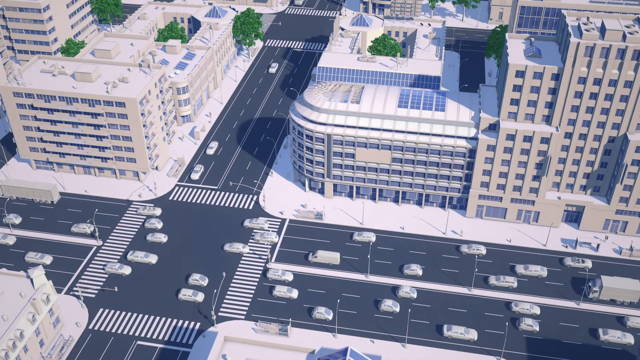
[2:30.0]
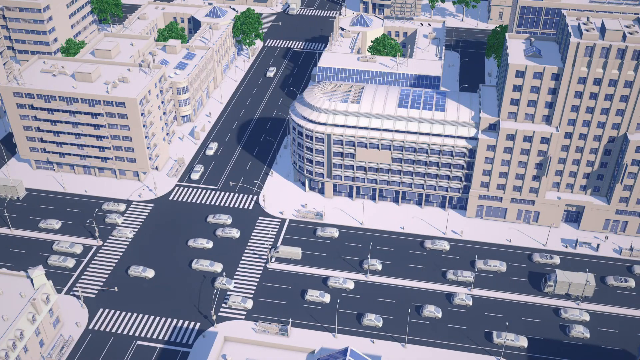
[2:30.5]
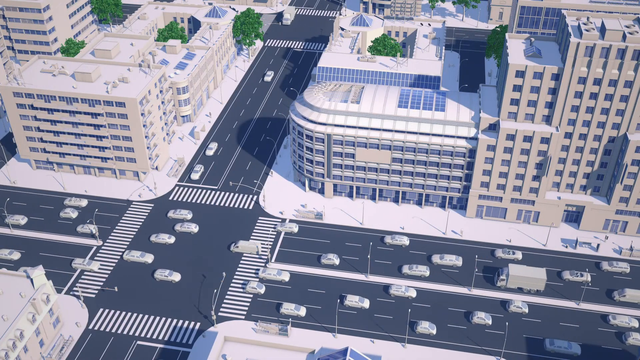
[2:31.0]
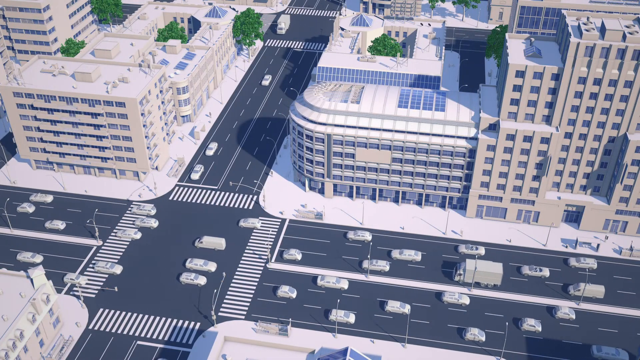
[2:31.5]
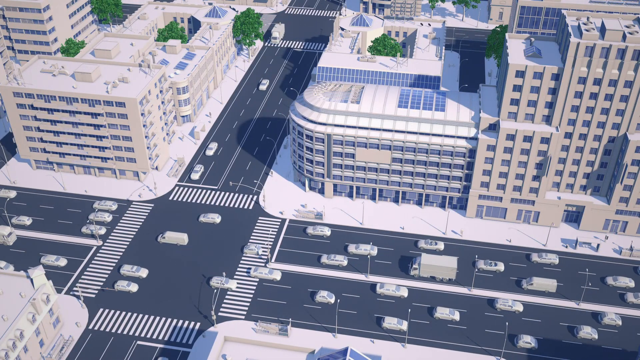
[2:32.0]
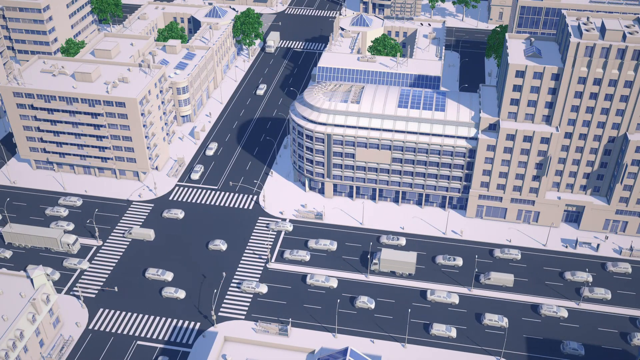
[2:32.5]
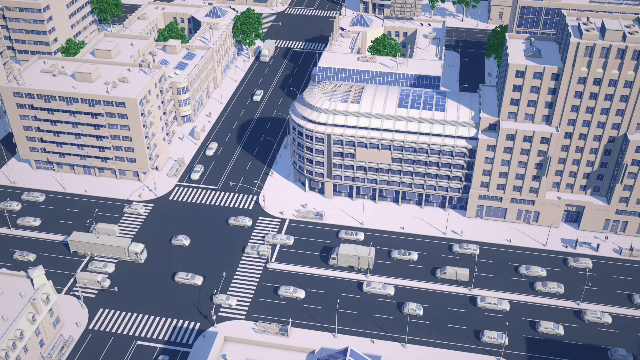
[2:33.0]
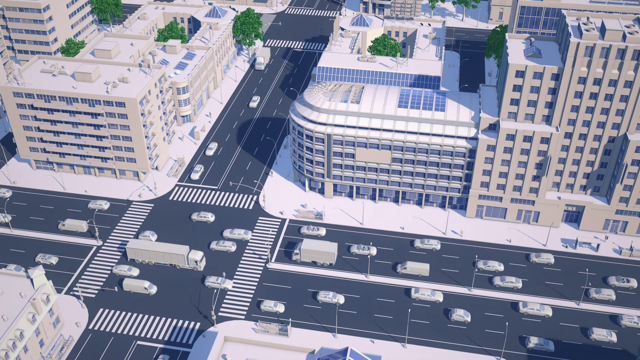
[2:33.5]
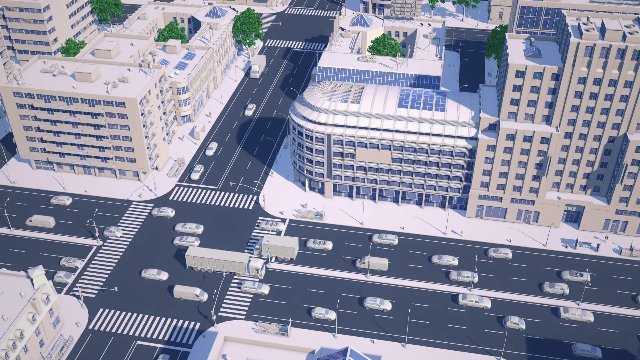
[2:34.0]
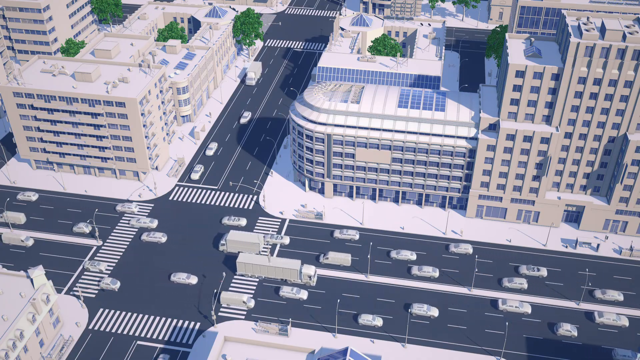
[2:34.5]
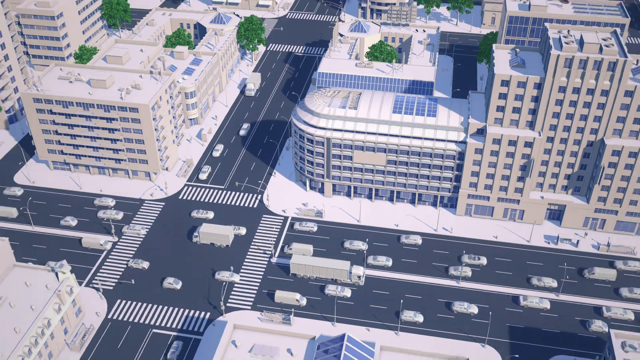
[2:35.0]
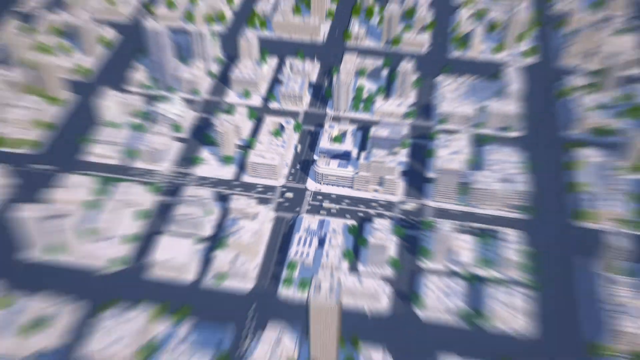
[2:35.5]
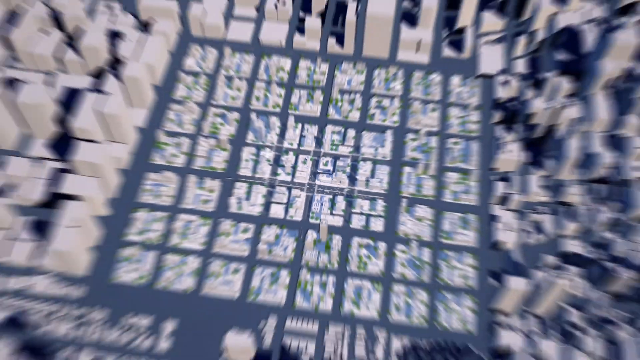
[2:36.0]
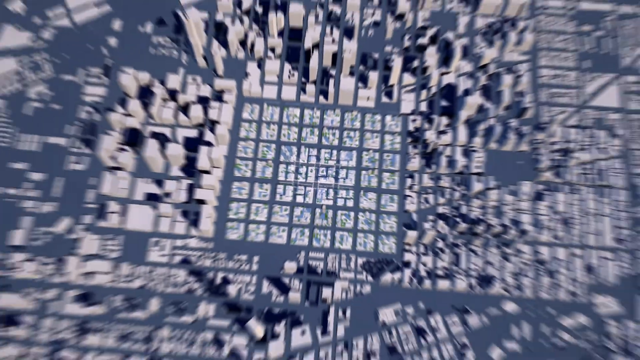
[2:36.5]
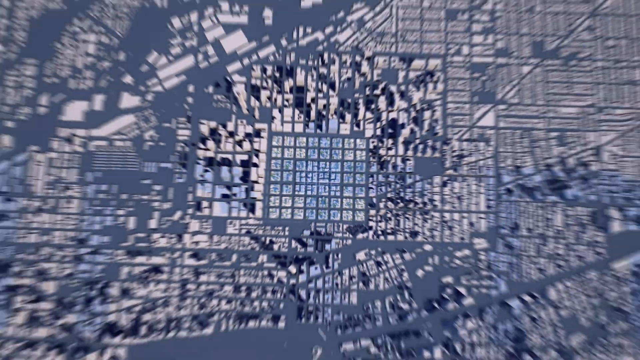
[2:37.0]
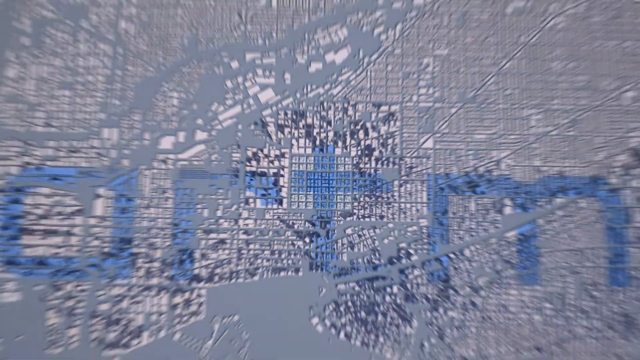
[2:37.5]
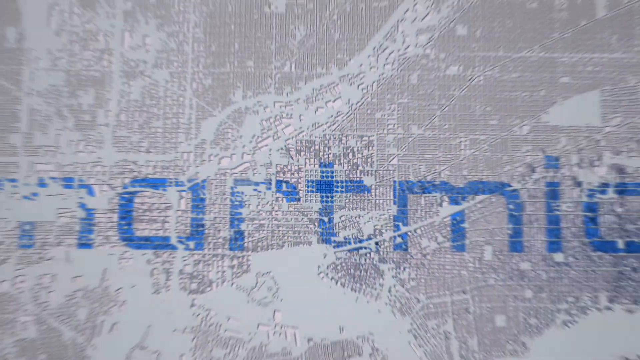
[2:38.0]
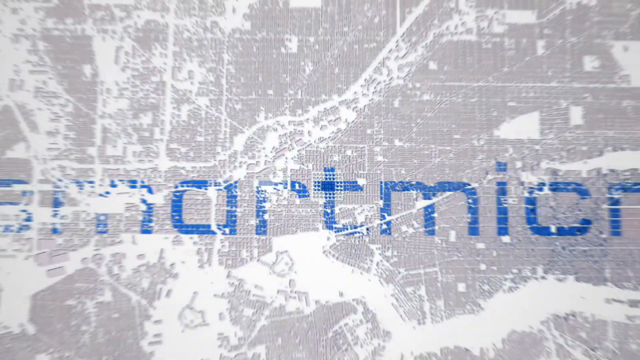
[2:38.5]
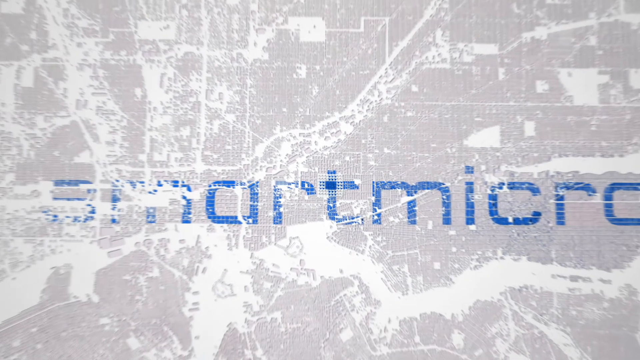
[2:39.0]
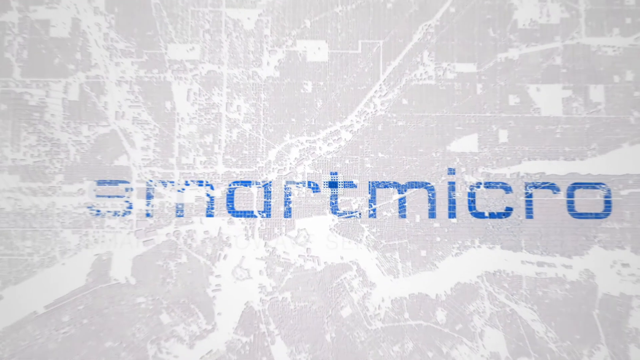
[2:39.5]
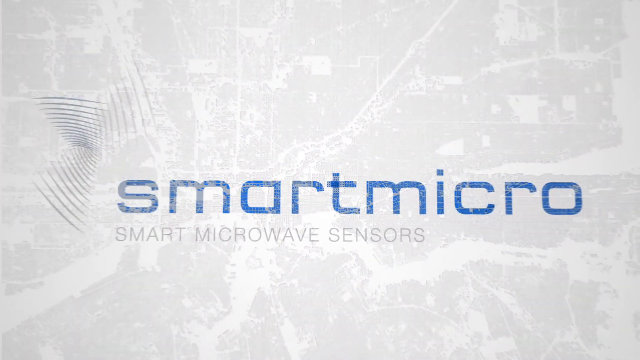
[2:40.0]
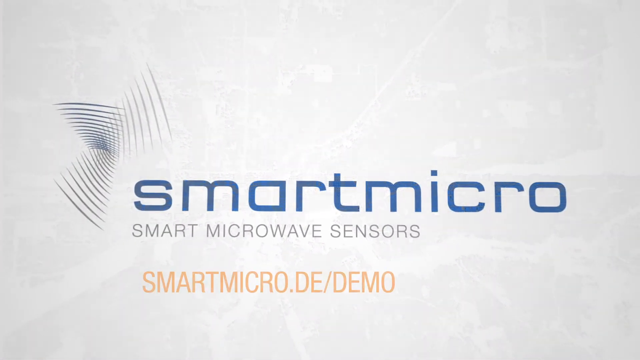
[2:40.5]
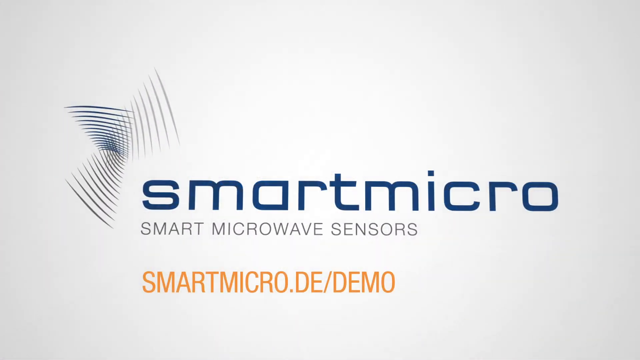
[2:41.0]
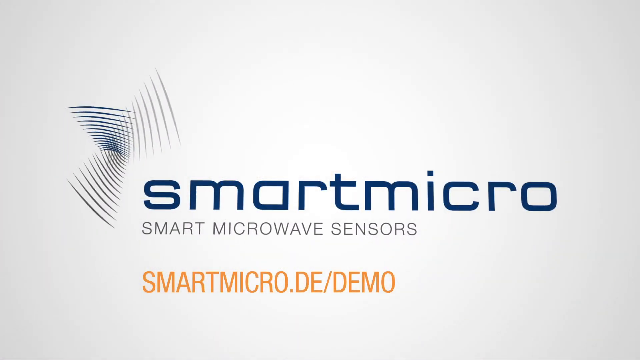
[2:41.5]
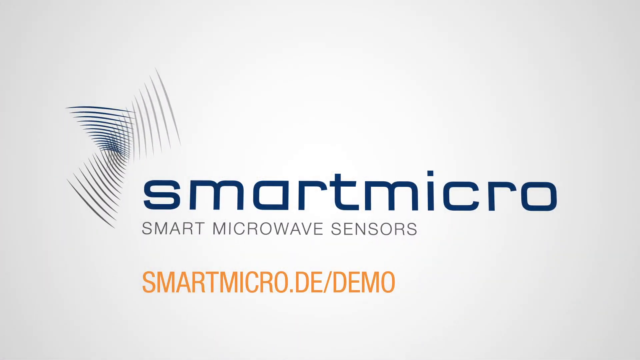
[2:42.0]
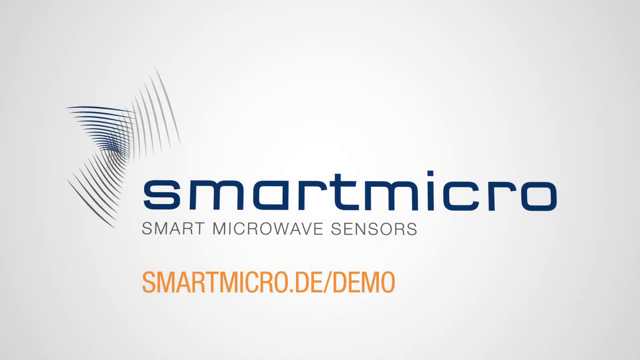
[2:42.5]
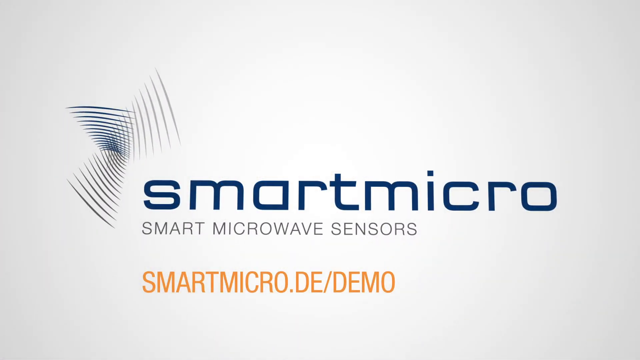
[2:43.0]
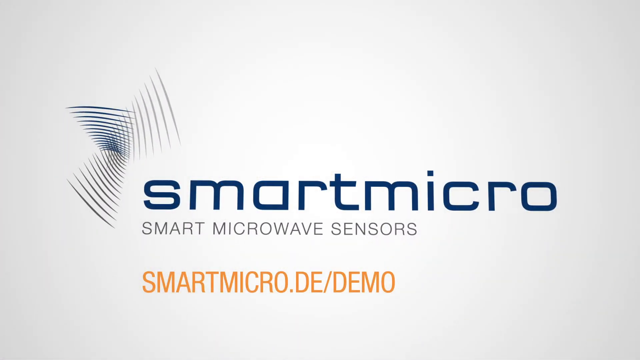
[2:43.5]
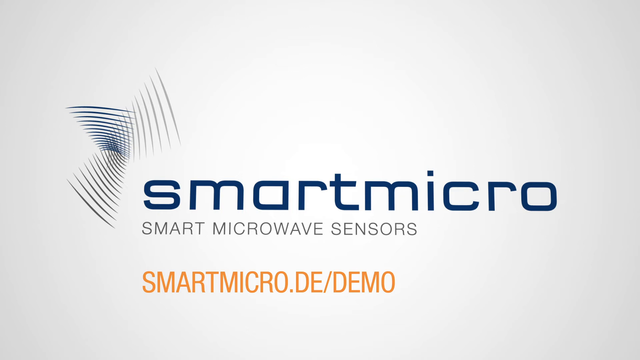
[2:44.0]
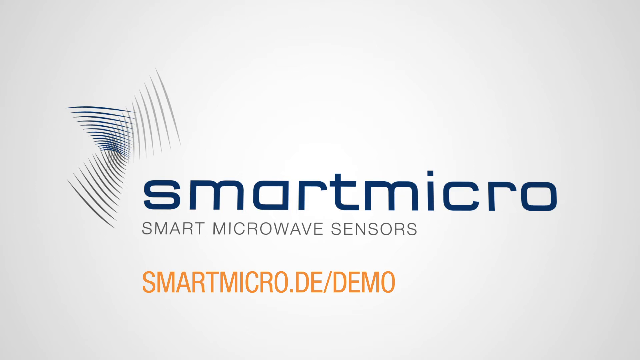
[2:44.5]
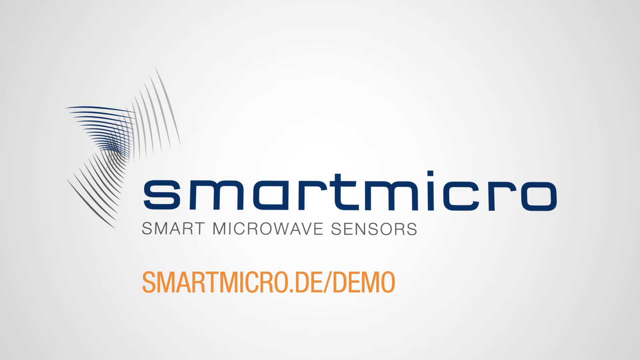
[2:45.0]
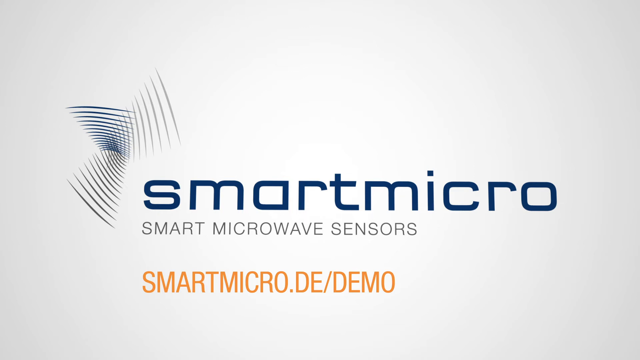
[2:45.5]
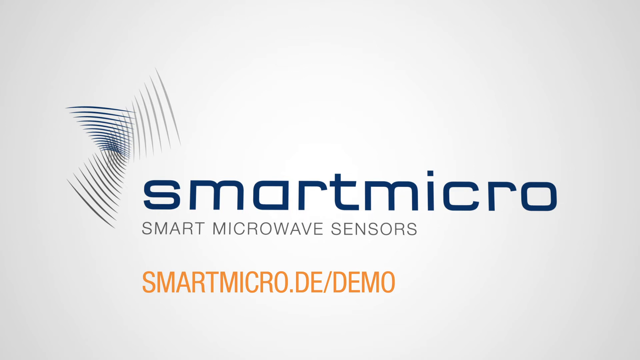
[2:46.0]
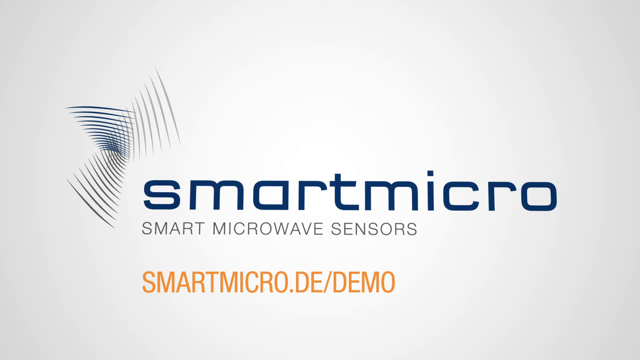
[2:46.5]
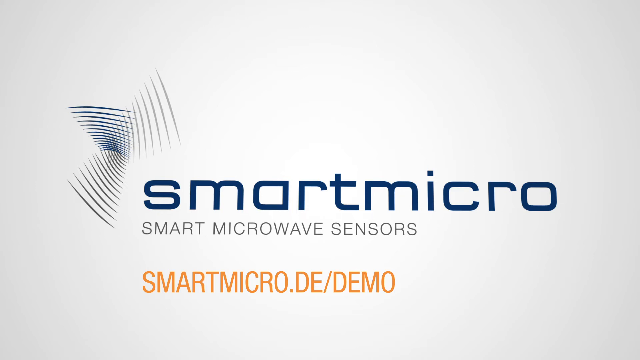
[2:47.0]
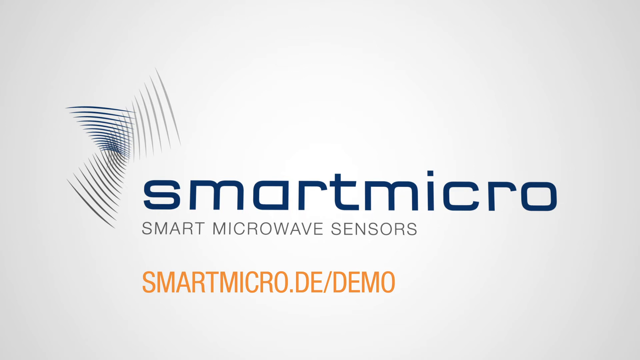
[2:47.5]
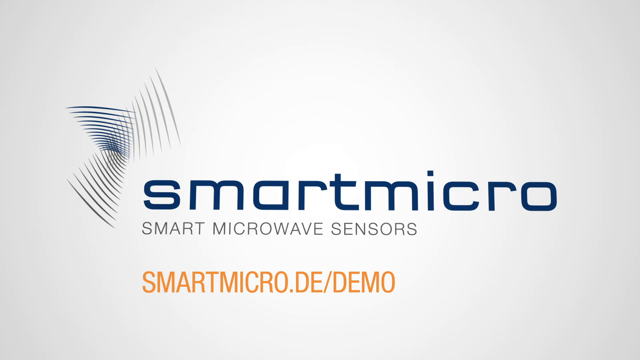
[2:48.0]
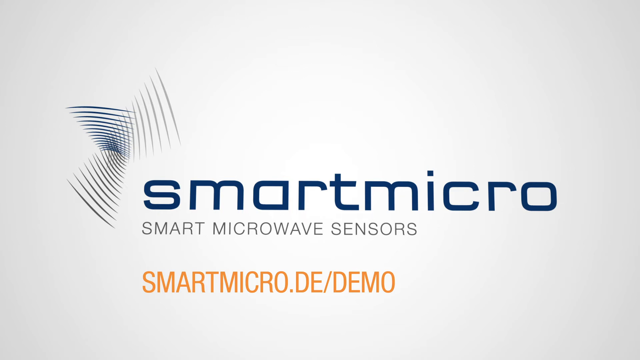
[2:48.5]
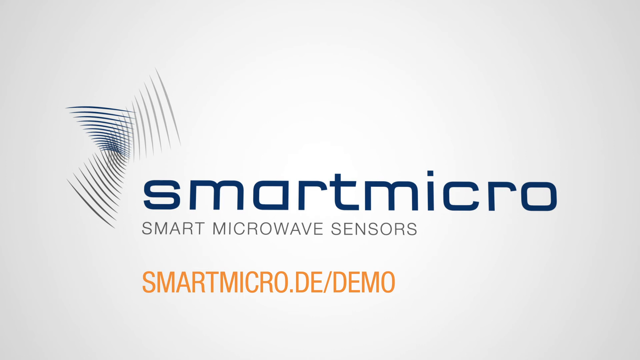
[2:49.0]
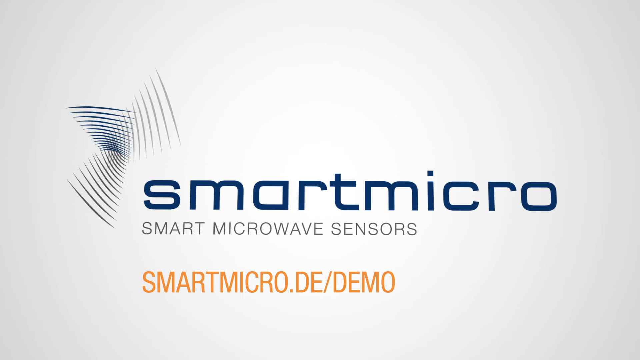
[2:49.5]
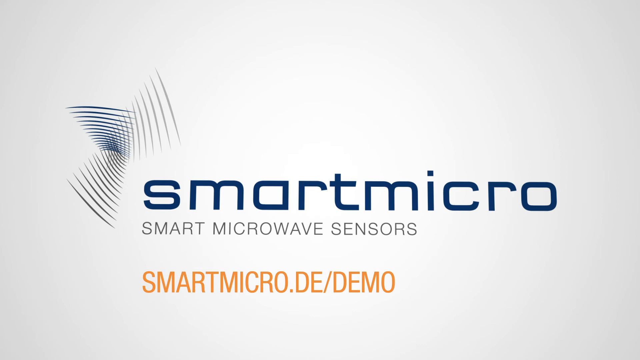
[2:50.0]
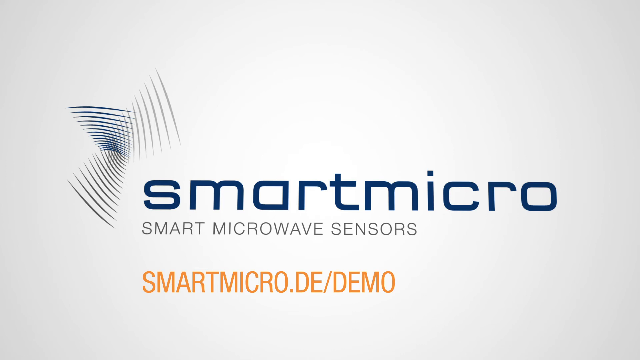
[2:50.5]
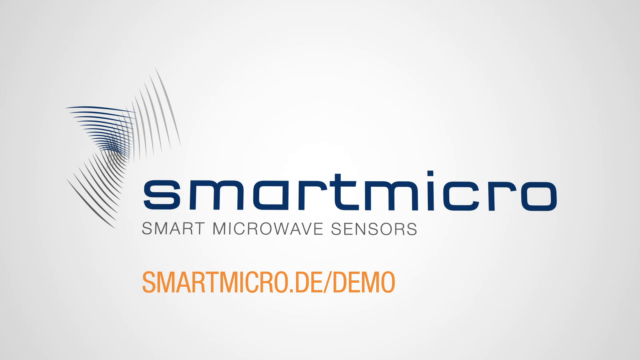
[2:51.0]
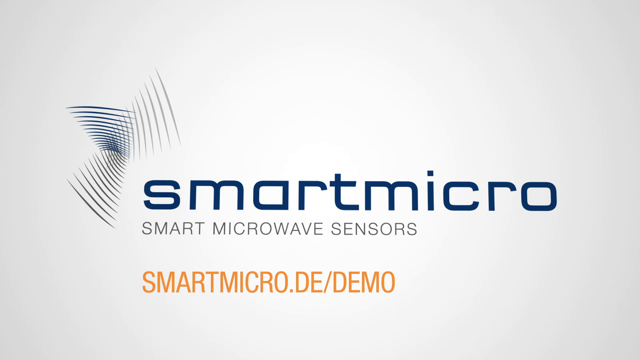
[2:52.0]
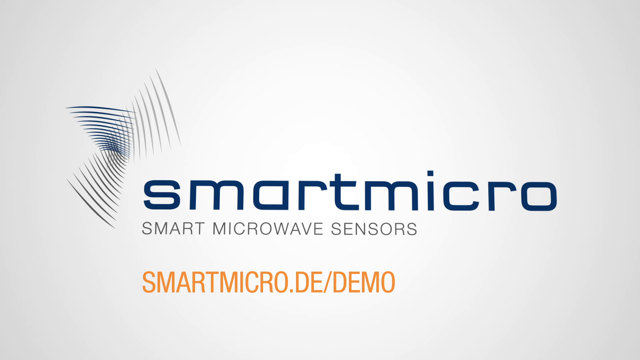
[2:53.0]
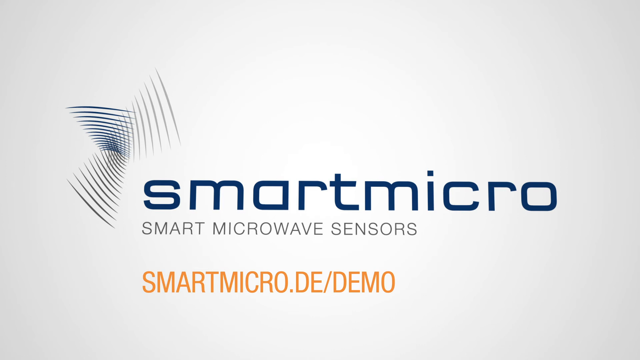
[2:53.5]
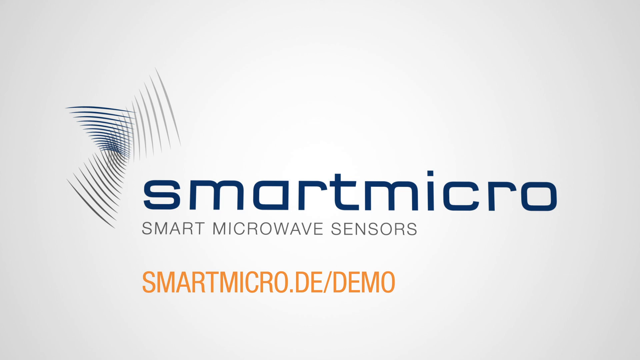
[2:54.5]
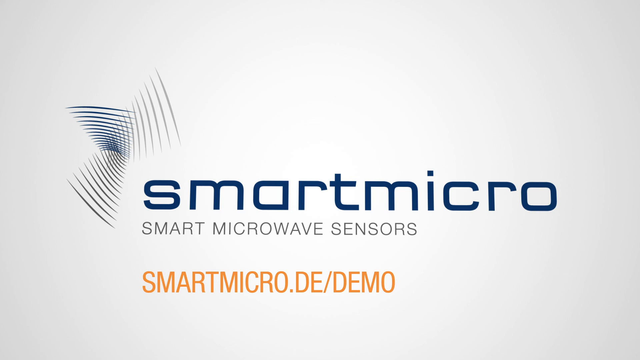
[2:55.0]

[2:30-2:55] Heavy traffic moves in all different directions, then the view zooms out to show a mega city or more of the world. Finally it returns to "smart micro," apparently the company name, smart microwave sensors.